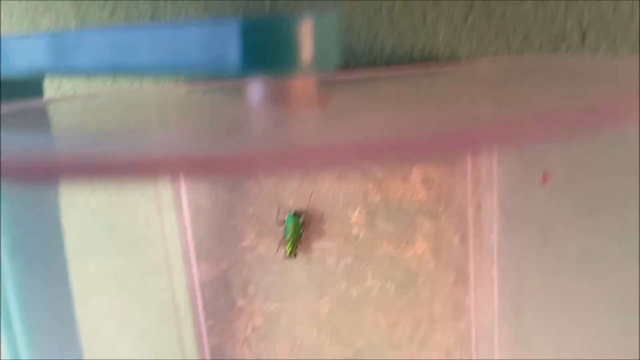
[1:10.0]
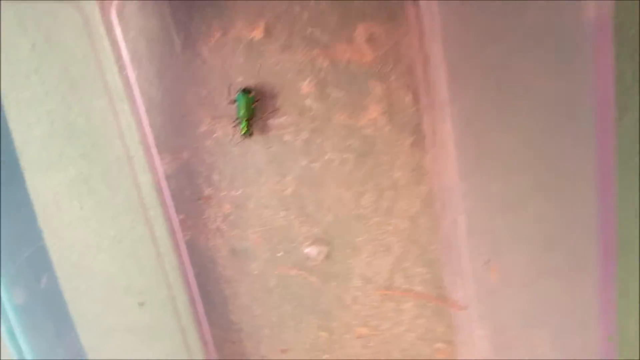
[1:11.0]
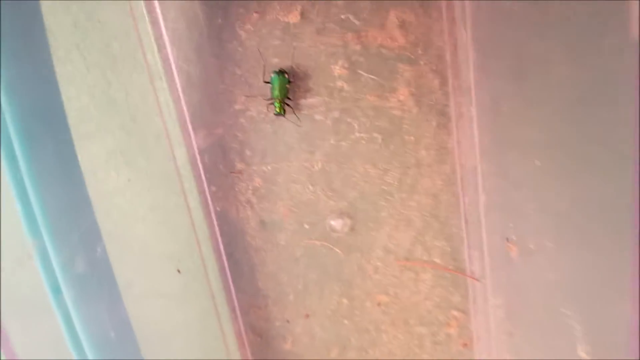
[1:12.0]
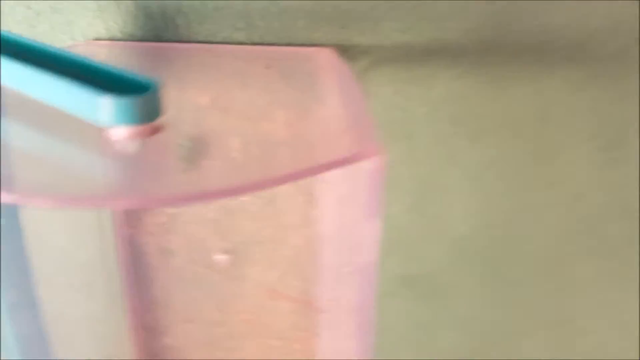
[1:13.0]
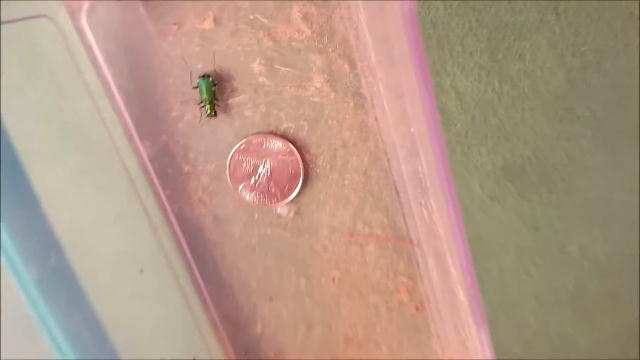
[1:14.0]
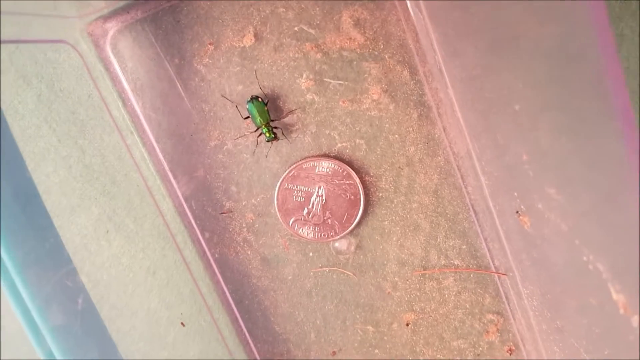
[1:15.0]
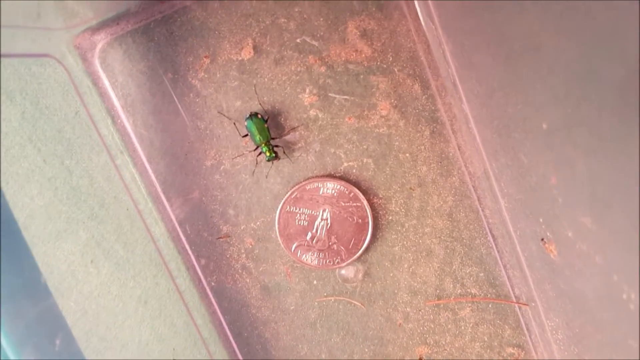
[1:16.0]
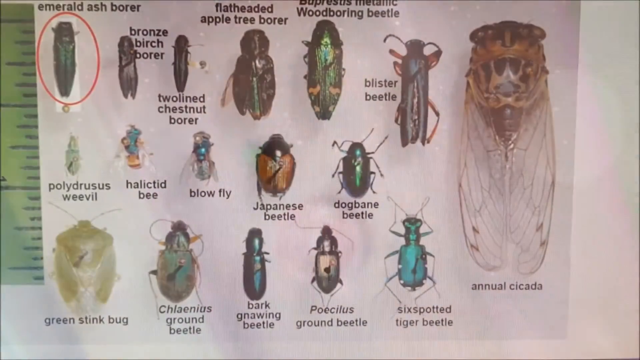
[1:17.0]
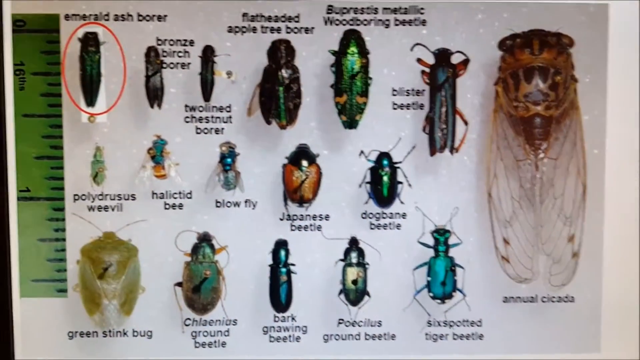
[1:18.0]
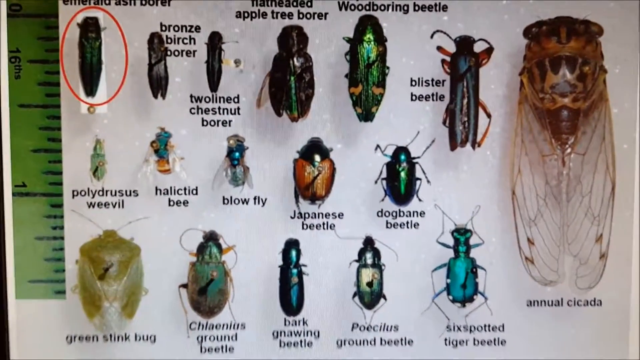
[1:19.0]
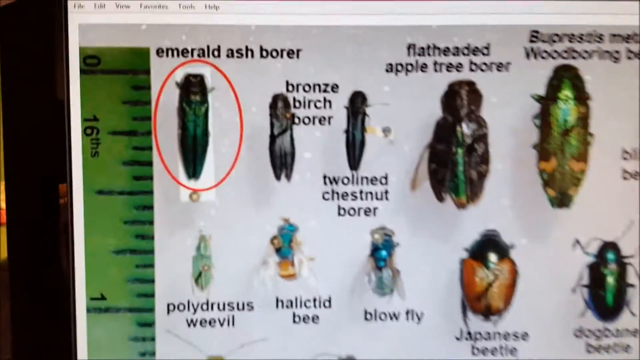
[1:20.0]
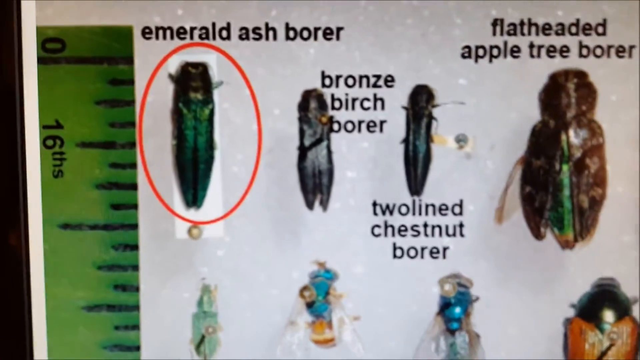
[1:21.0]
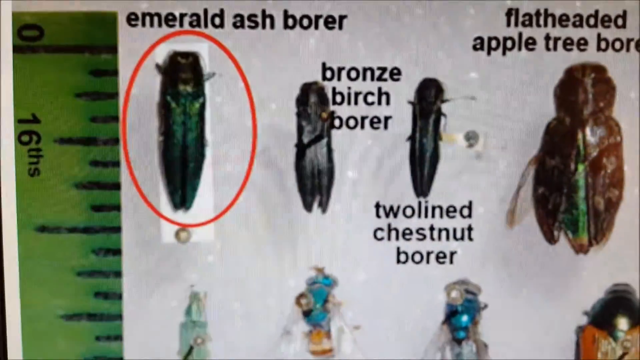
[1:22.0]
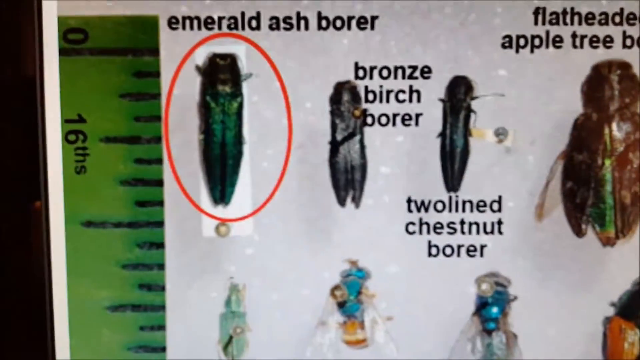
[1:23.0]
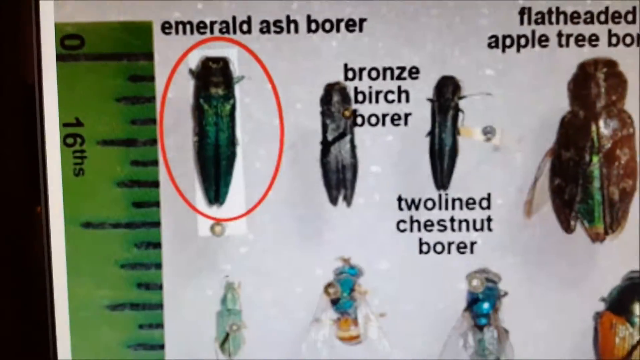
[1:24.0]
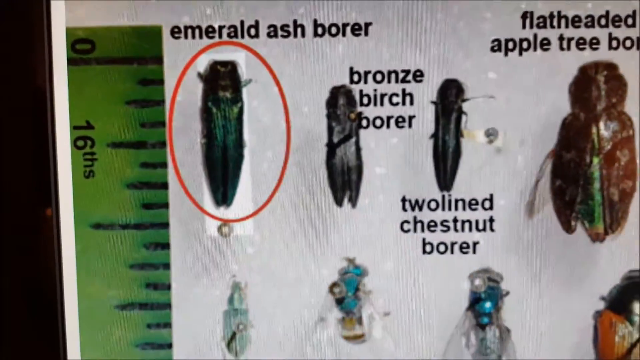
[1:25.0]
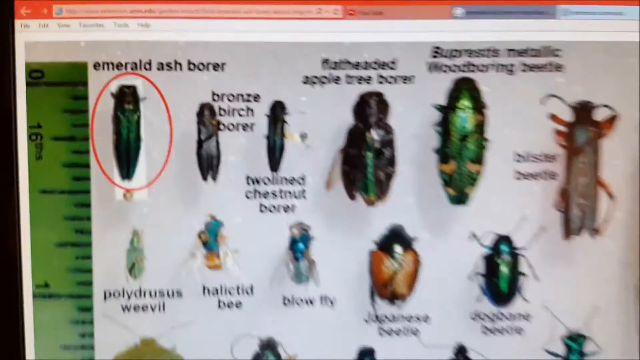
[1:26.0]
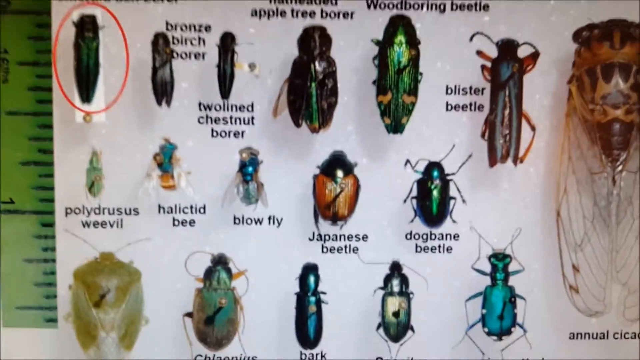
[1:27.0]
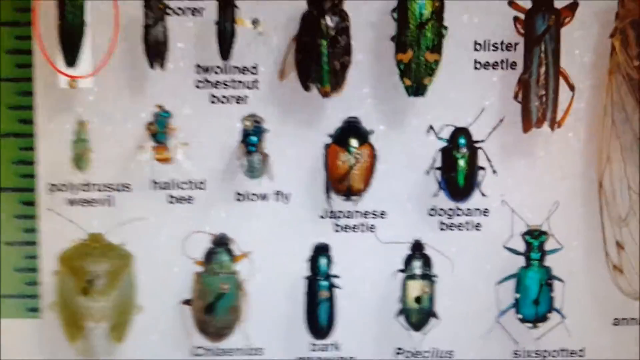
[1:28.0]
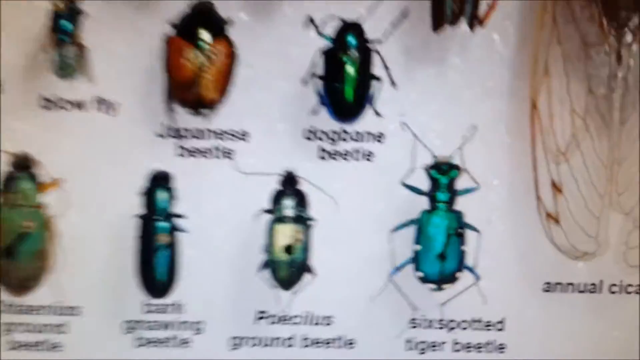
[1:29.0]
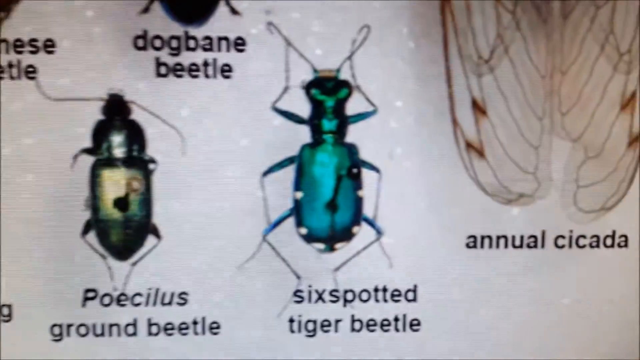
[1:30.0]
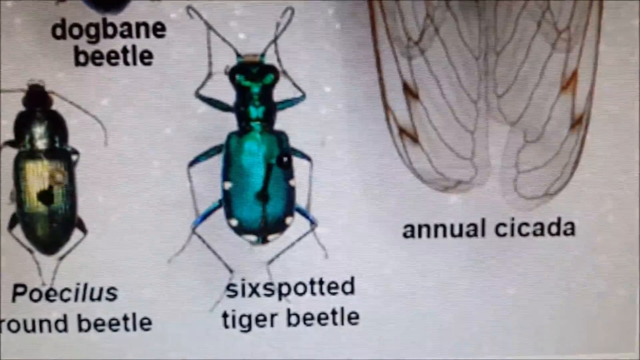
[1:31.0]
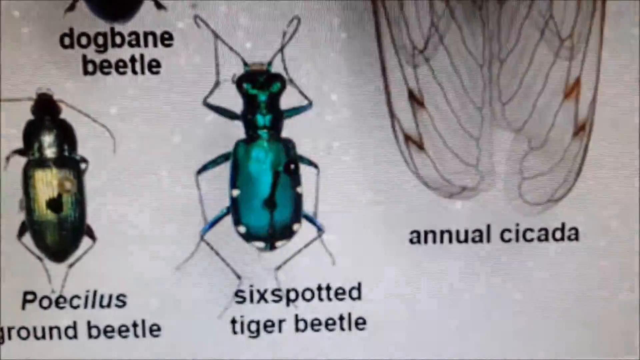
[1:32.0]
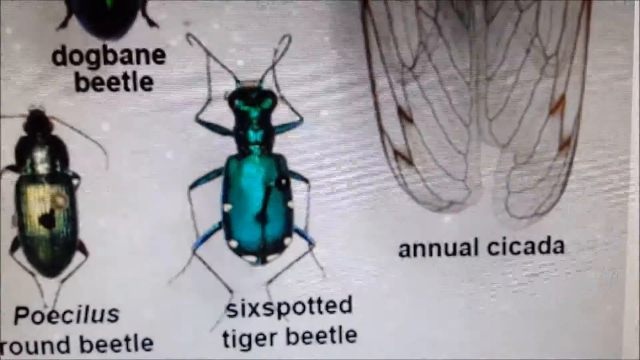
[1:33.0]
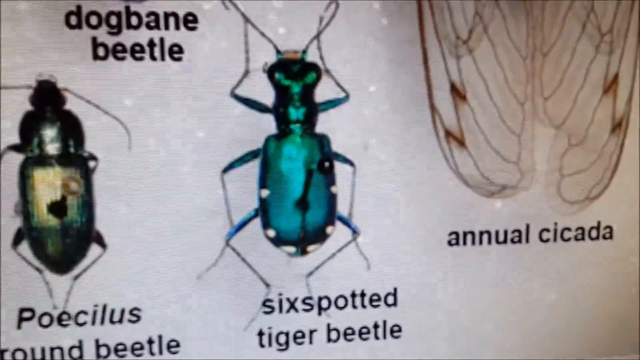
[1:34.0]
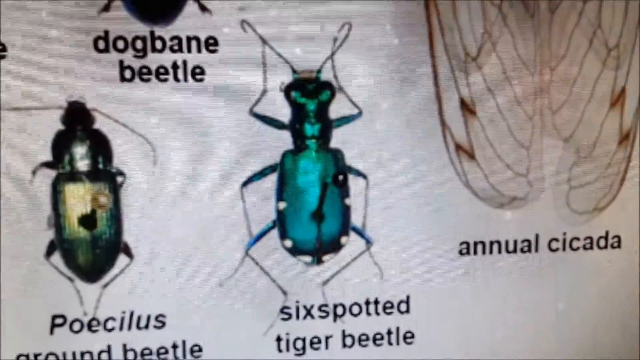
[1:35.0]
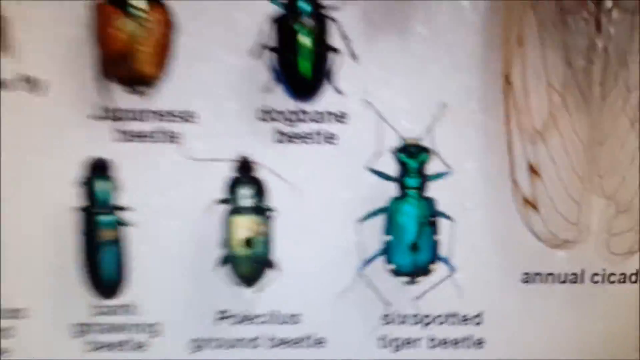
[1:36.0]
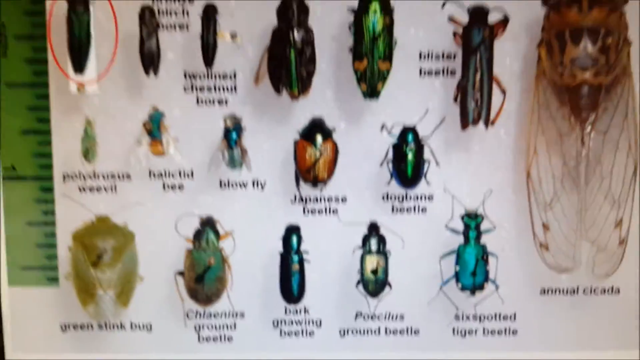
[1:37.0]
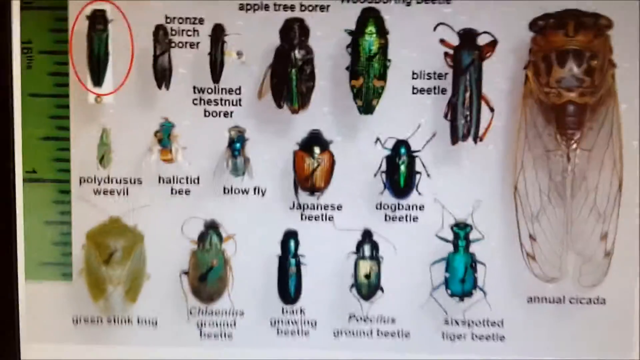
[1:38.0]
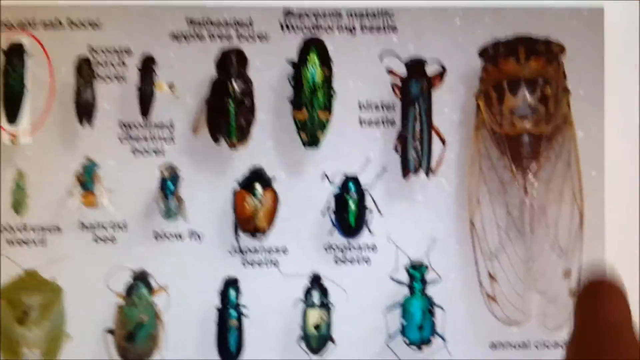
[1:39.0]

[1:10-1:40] The camera is zoomed out a little on the beetle. The man puts a bronze coin into the plastic container, which seems to startle the beetle, and it moves ever so slightly in the direction of the coin. The video then shows an image, apparently on a computer, of various bugs and beetles with the name of each. The emerald ash borer is circled, but it does not seem to be what is in the container. In the bottom right-hand side of the screen is the six-spotted tiger beetle, which looks practically identical to the beetle in the container. A ruler on the side of the image shows the scale of the bugs, and this bug seems to be about an inch long, with two spots at the back.